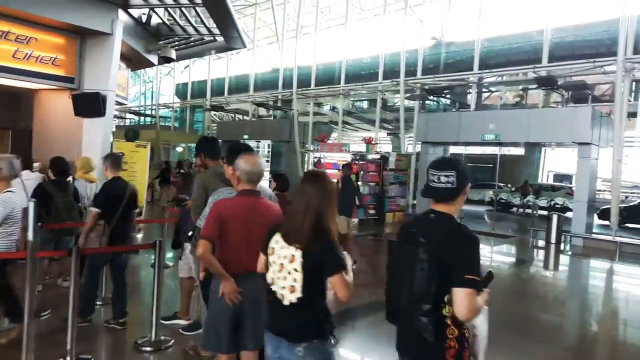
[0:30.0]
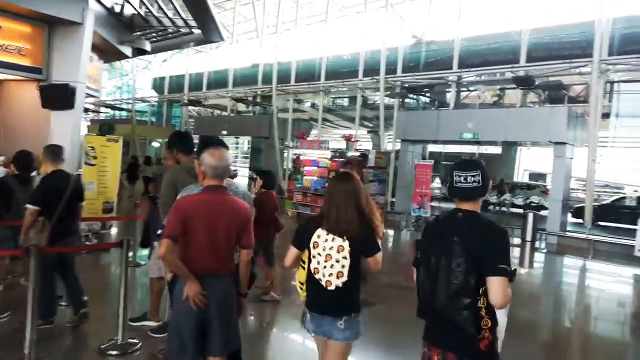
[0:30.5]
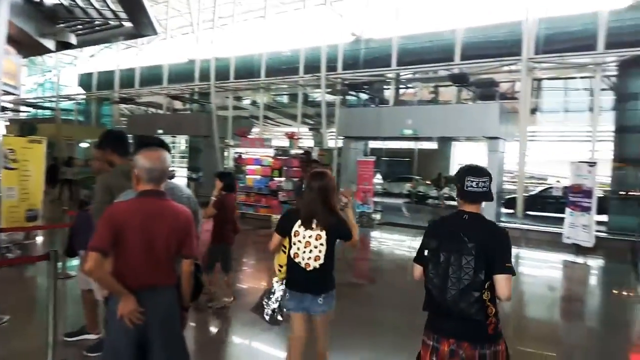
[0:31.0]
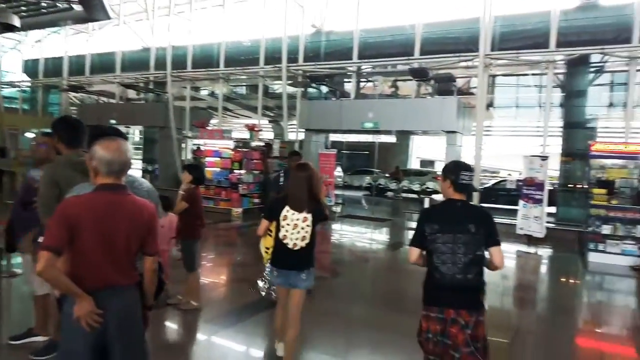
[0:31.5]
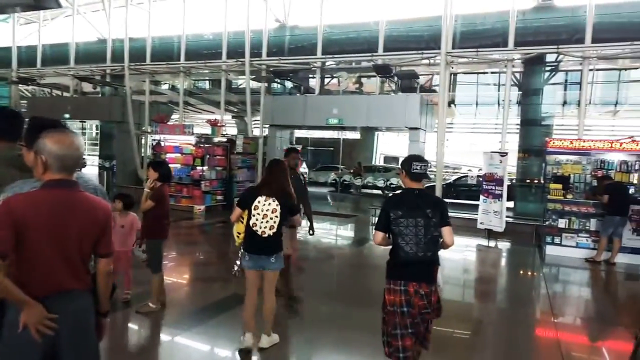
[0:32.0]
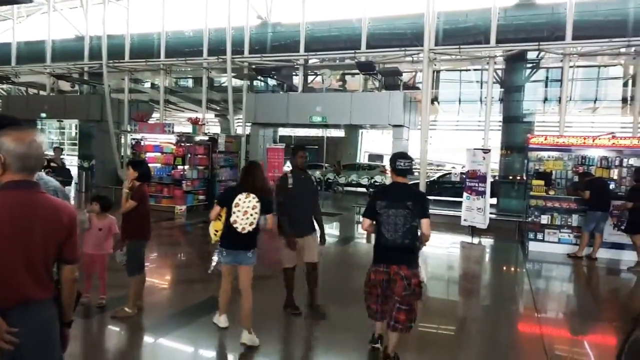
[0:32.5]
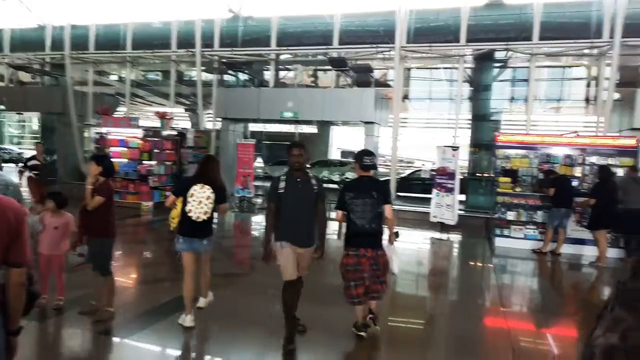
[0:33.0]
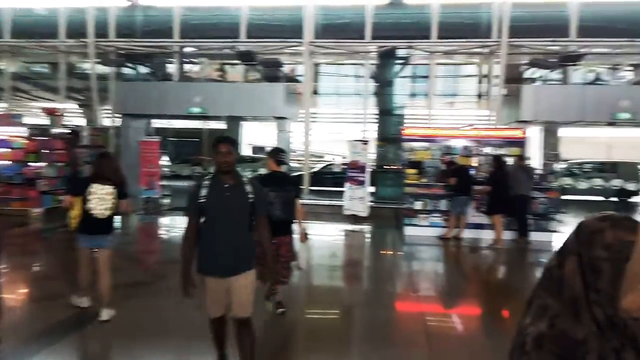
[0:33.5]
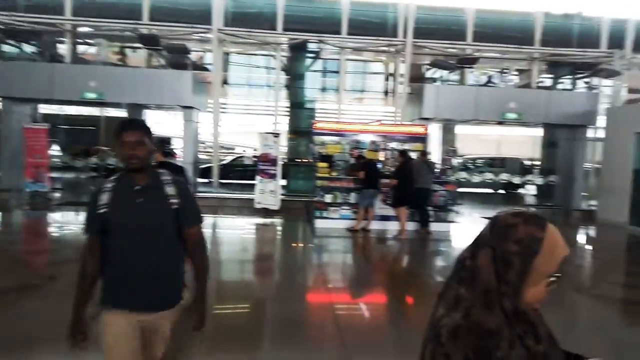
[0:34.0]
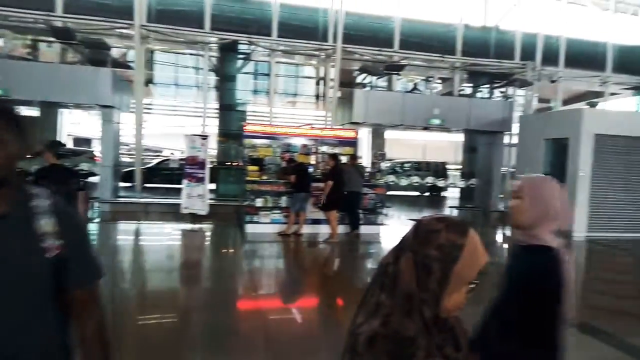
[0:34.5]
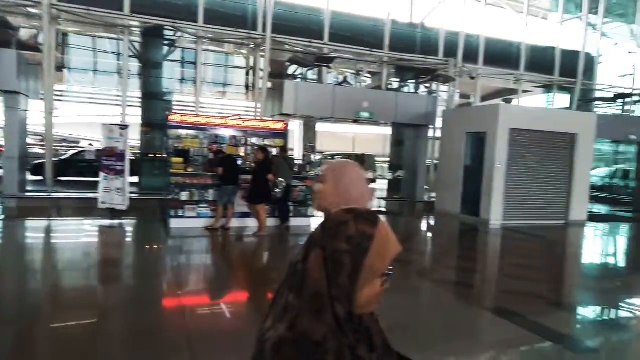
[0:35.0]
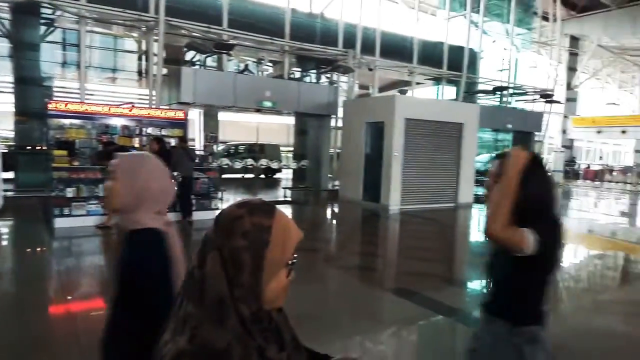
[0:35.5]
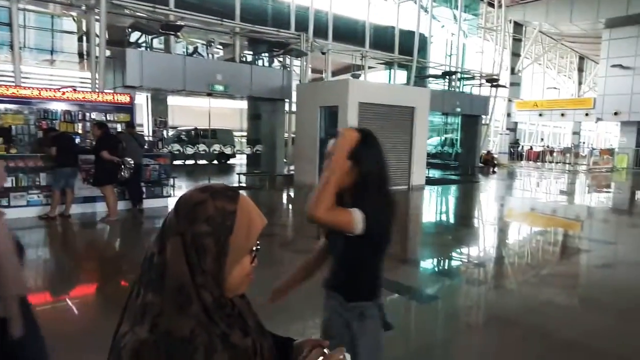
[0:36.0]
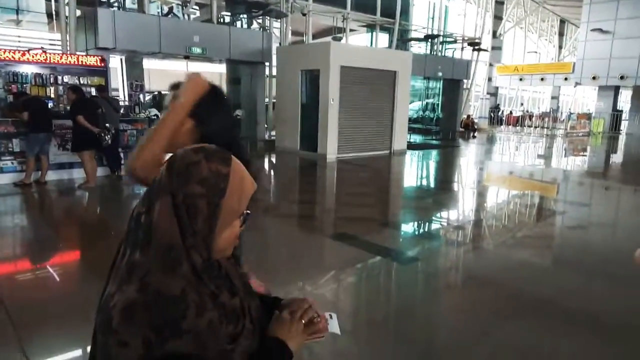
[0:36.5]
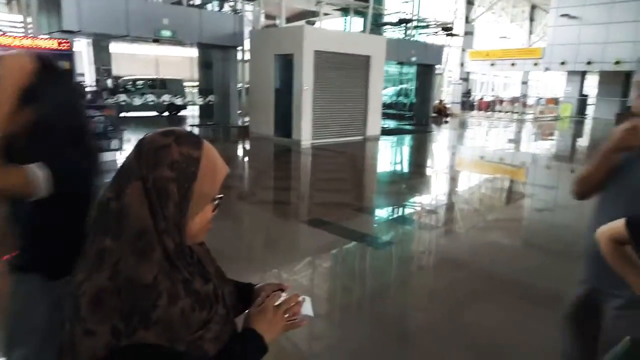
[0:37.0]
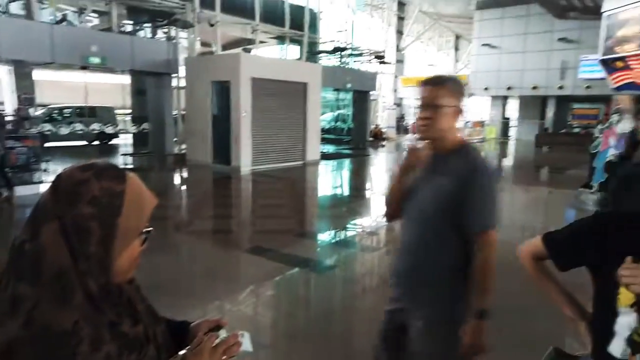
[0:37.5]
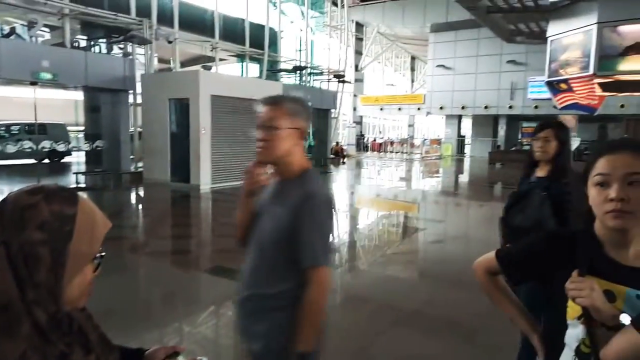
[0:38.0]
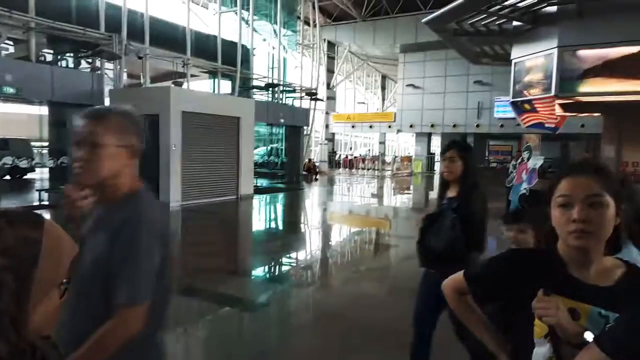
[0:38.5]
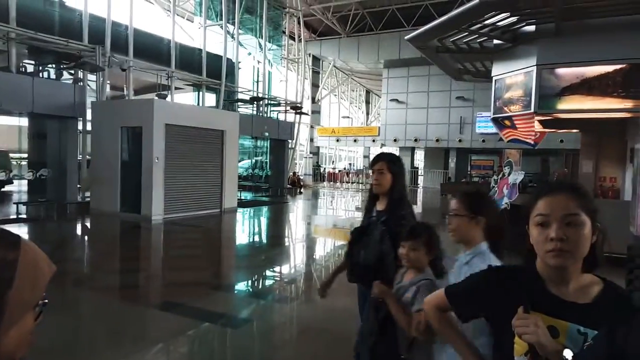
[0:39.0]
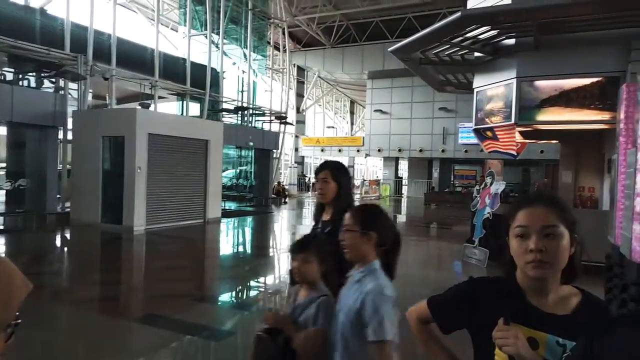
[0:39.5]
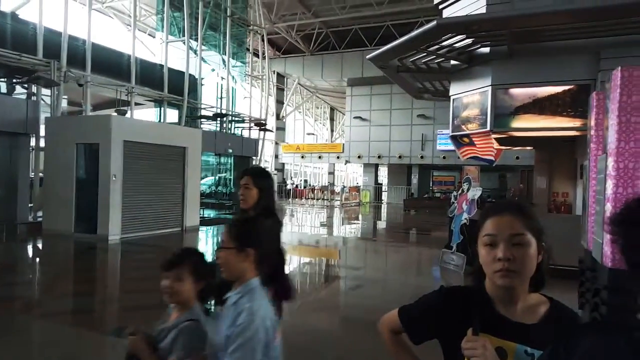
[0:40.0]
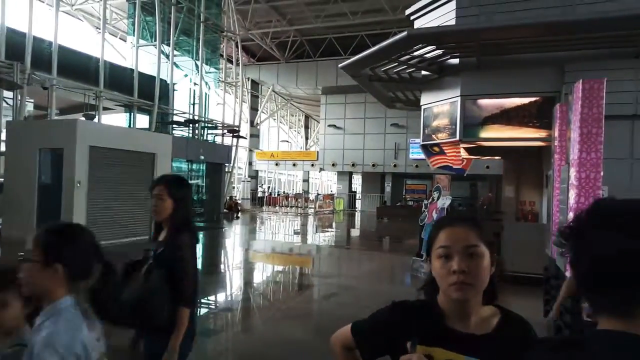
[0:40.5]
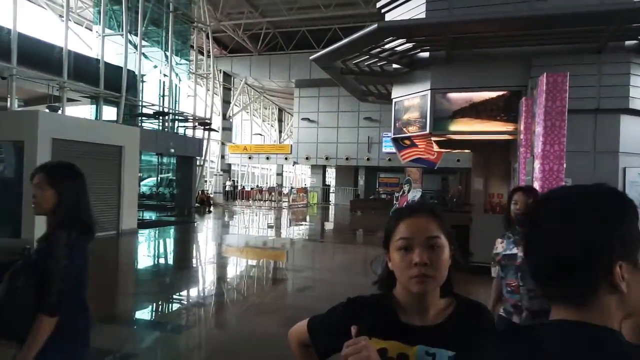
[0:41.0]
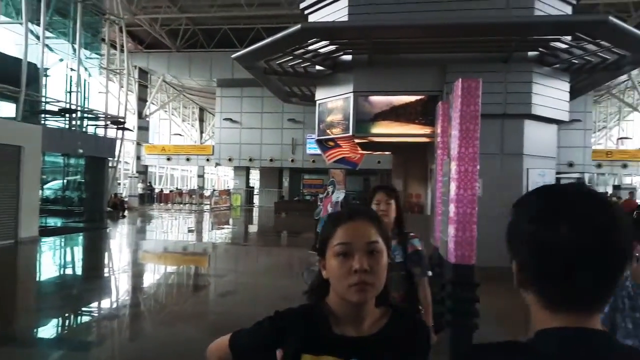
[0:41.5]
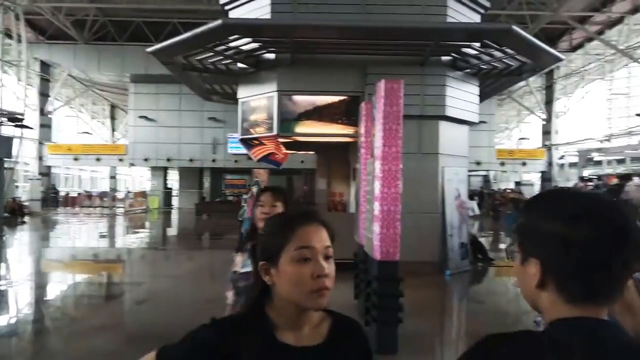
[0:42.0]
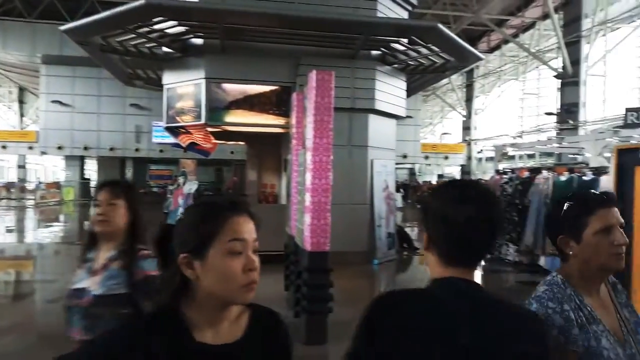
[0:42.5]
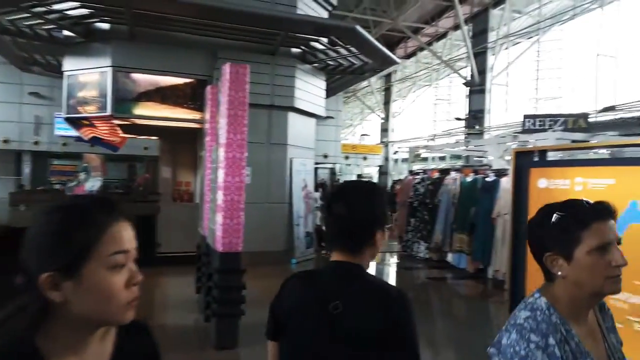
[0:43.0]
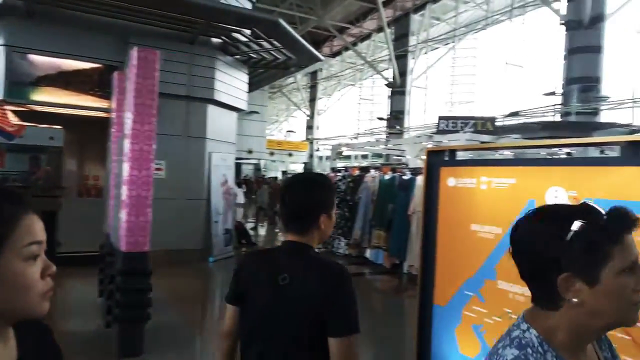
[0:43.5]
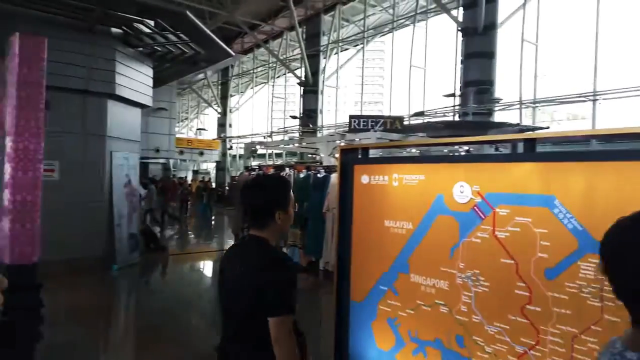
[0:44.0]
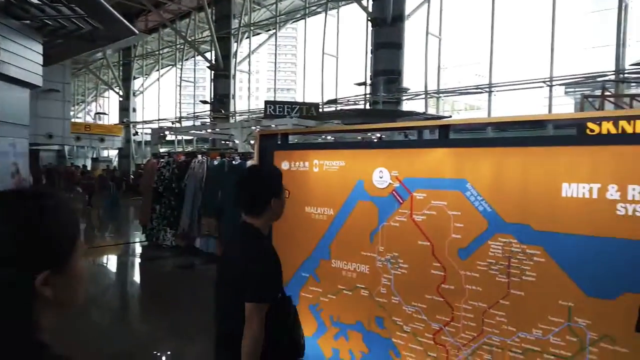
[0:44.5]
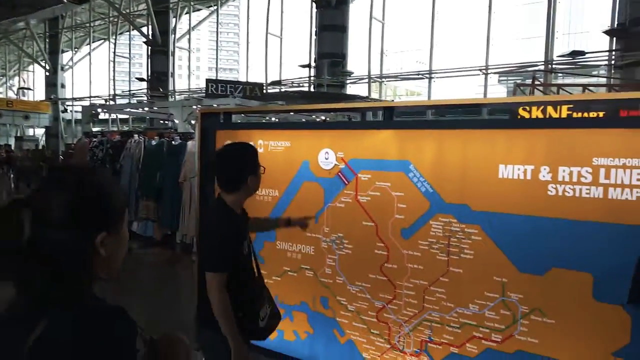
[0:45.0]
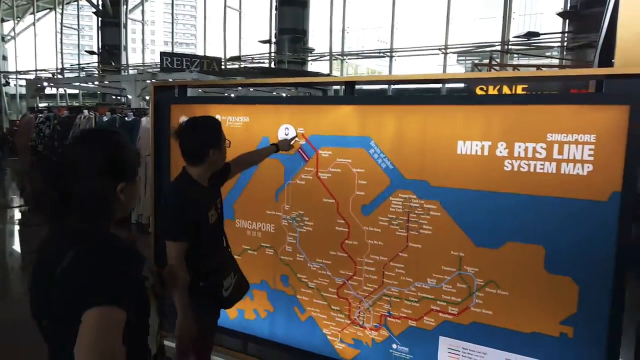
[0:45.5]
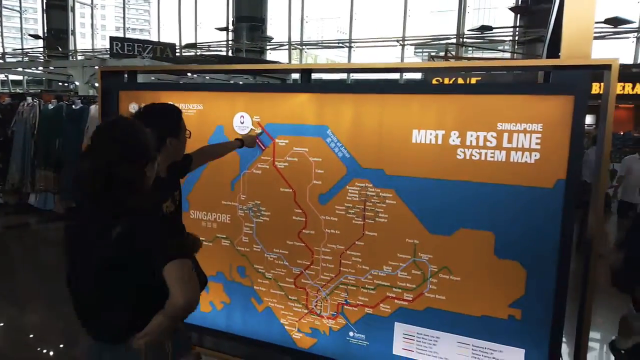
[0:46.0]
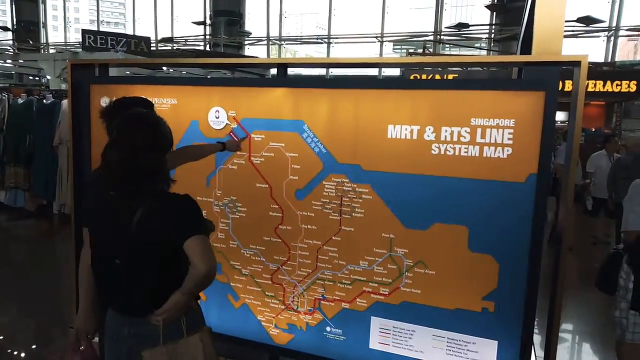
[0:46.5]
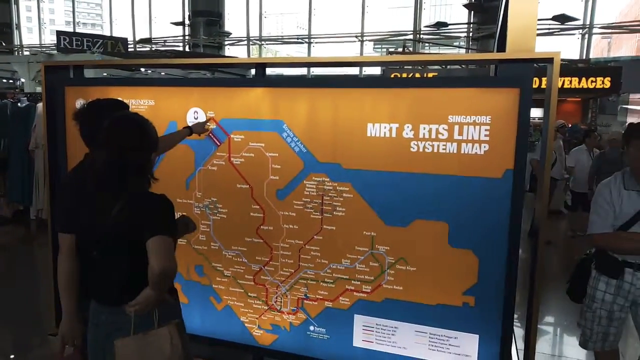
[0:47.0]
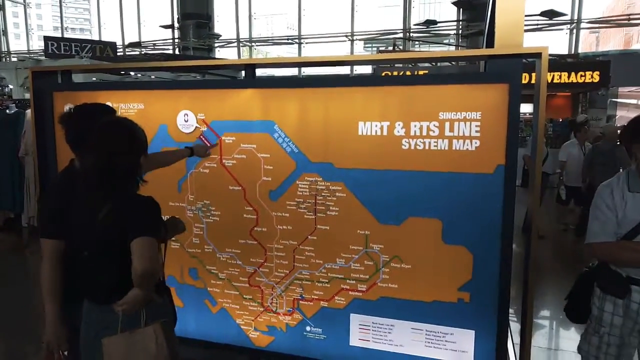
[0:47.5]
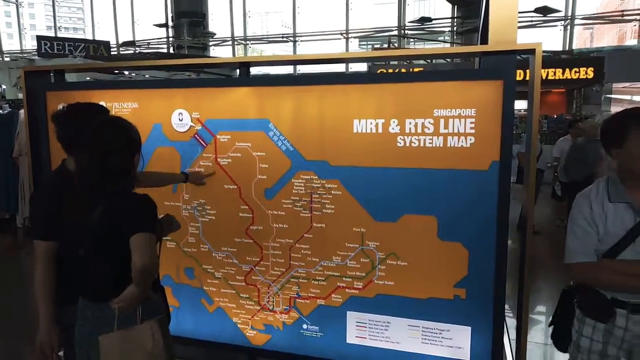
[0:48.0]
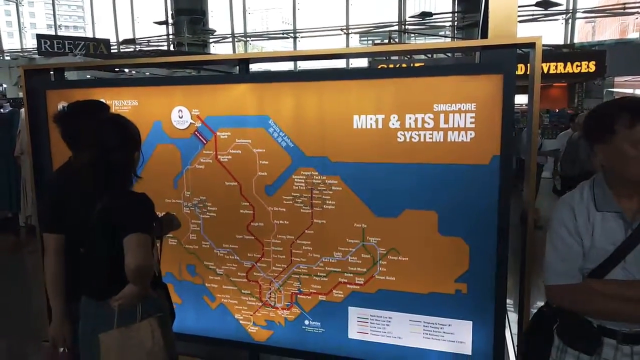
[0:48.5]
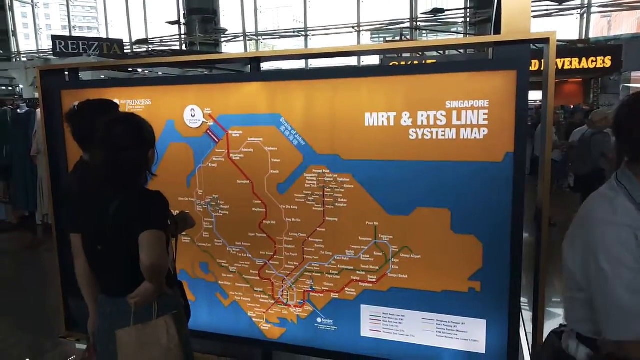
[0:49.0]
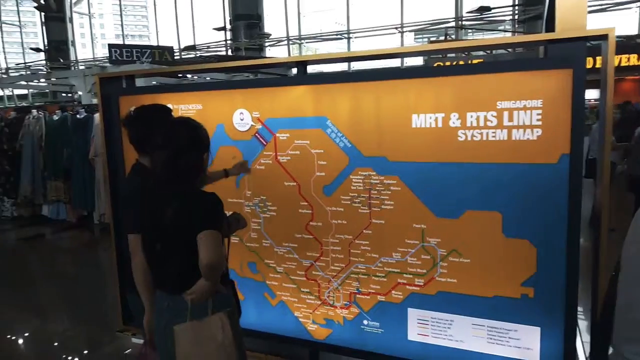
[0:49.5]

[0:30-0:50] Inside a transit hub station, there is a very polished floor and a high vaulted, covered ceiling, along with multiple kiosks and billboards for navigating the Singapore transit system. Several dozen people walk around, many carrying bags and purses or wheeling luggage carts in front of or behind them. As the video rotates around the transit center, several lines for ticket counters come into view, with dozens of people waiting in line to purchase tickets, marked off by ropes and barriers. Several kiosks are visible in the background. For a brief moment, the outside of the transit hub is visible, with cars parked along a causeway for picking people up and dropping them off. The video appears to be taken in the daytime, as sunlight shines into the transit station.